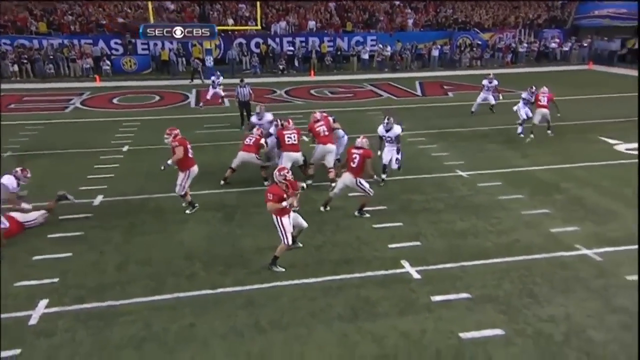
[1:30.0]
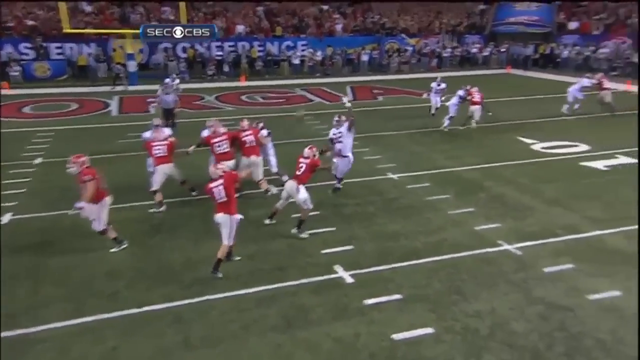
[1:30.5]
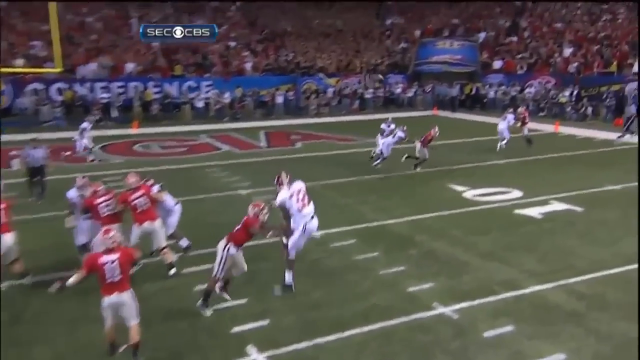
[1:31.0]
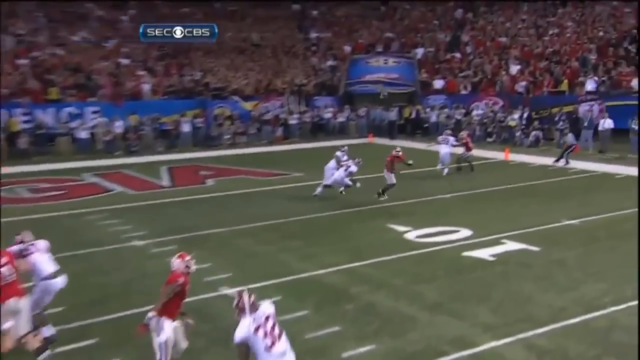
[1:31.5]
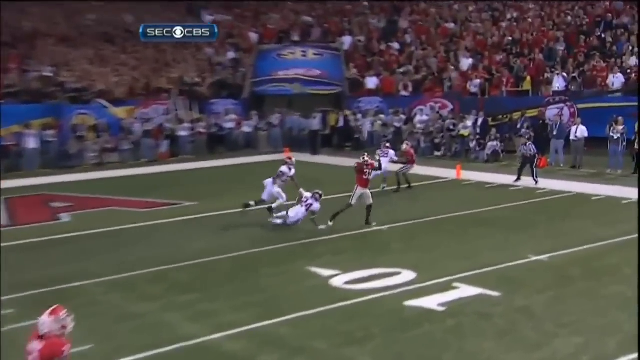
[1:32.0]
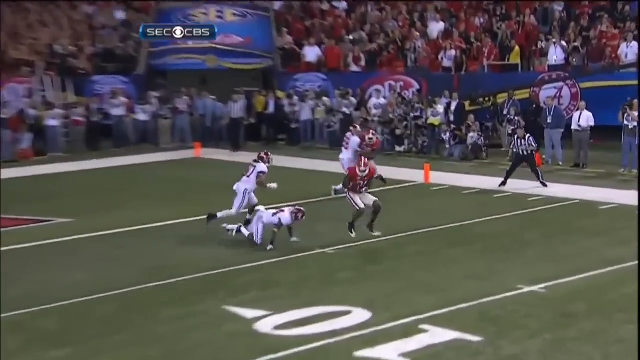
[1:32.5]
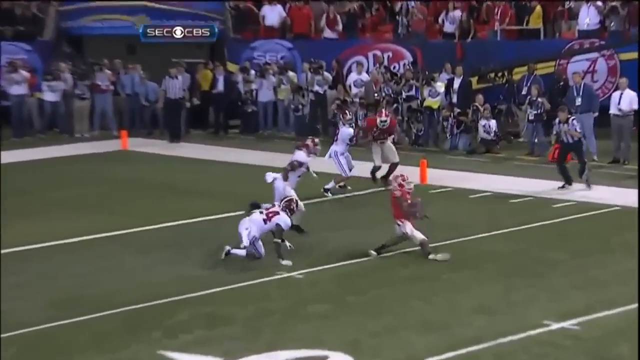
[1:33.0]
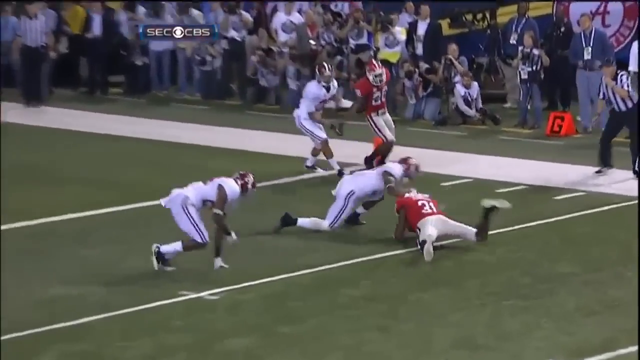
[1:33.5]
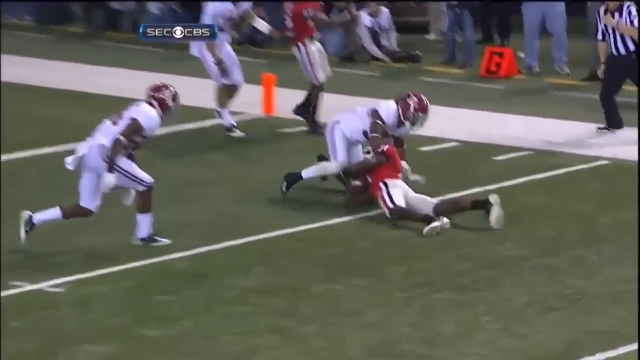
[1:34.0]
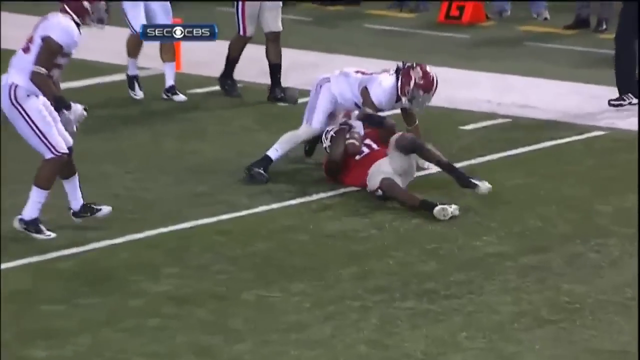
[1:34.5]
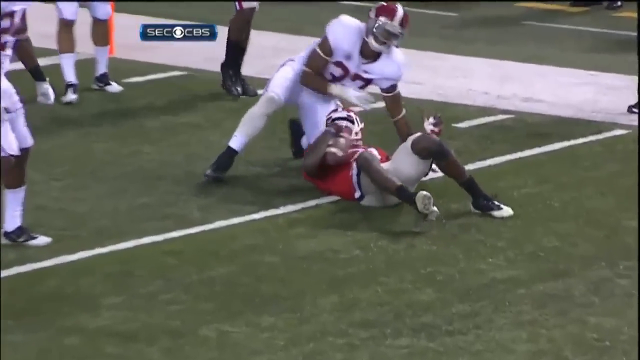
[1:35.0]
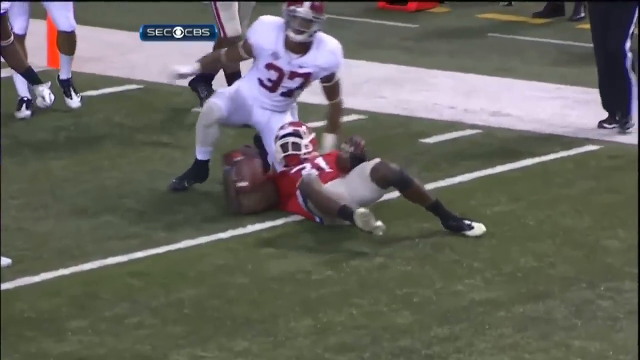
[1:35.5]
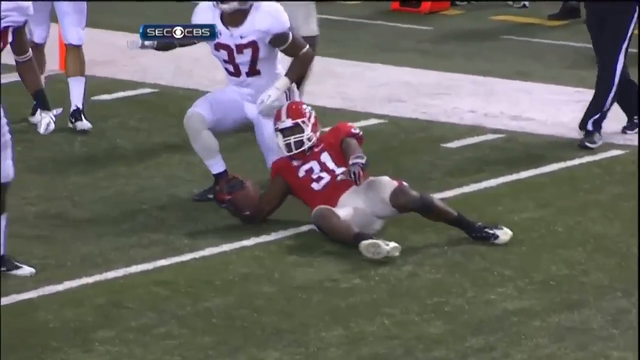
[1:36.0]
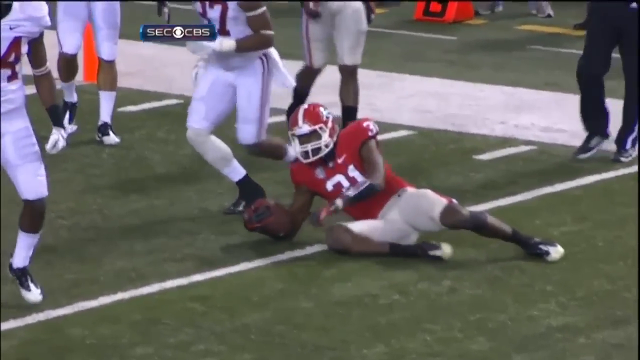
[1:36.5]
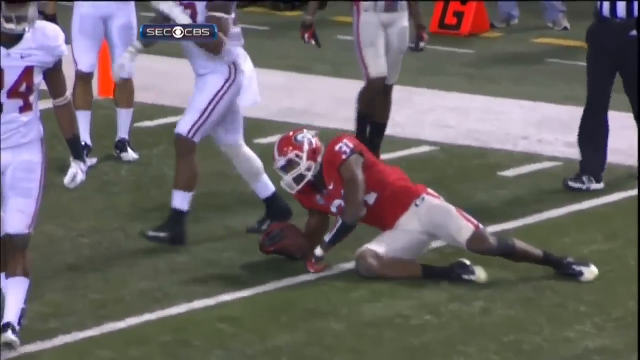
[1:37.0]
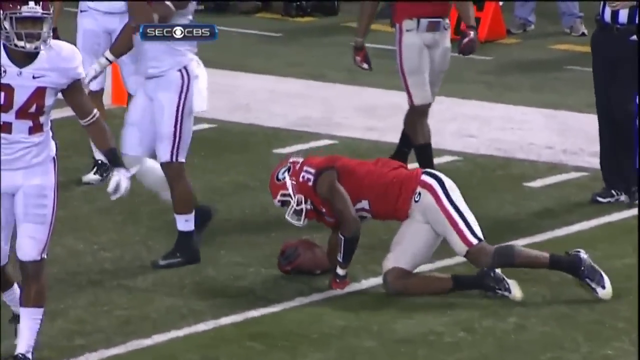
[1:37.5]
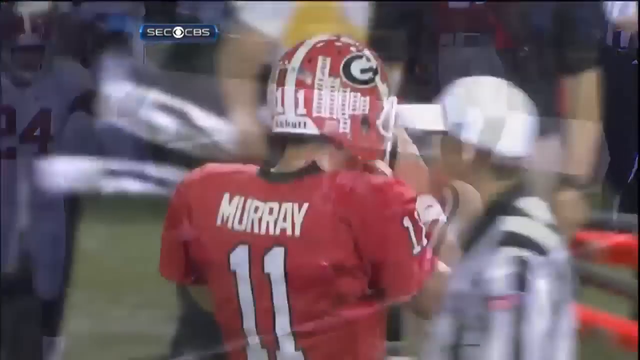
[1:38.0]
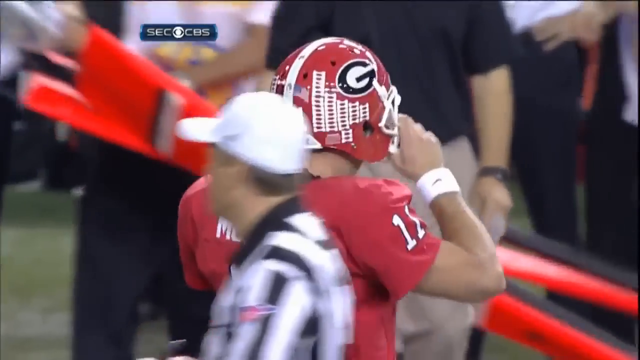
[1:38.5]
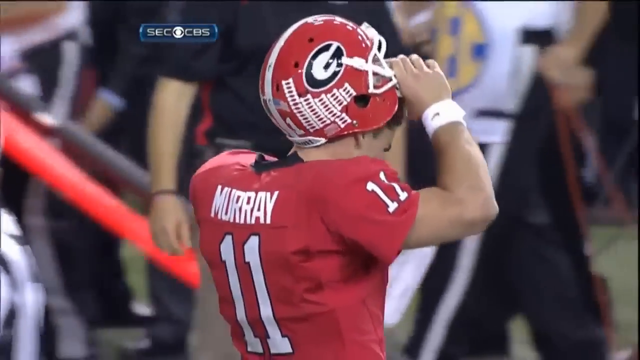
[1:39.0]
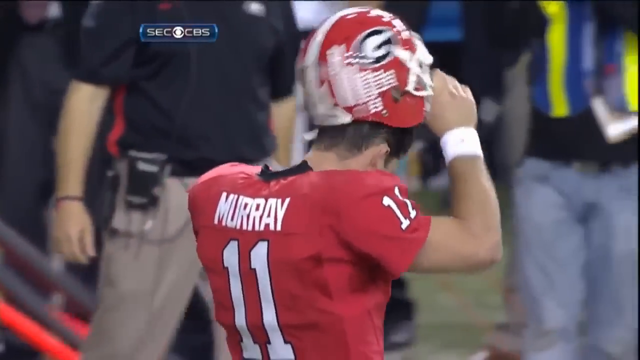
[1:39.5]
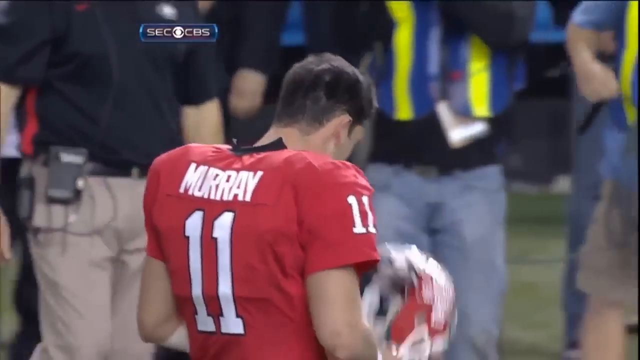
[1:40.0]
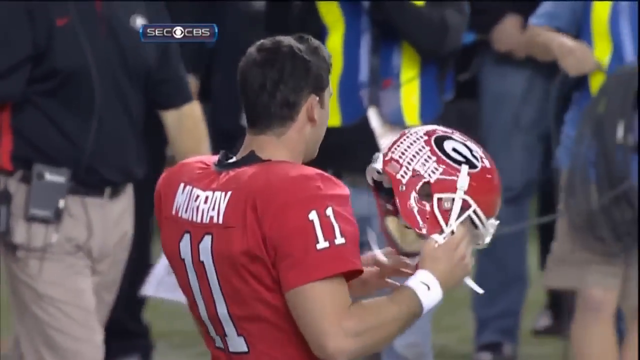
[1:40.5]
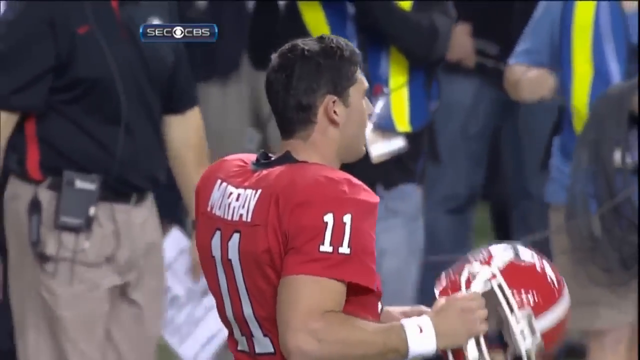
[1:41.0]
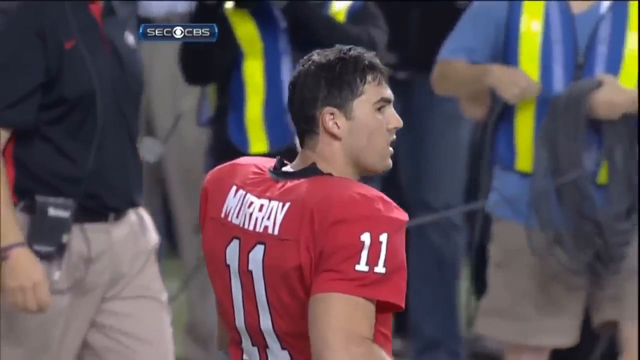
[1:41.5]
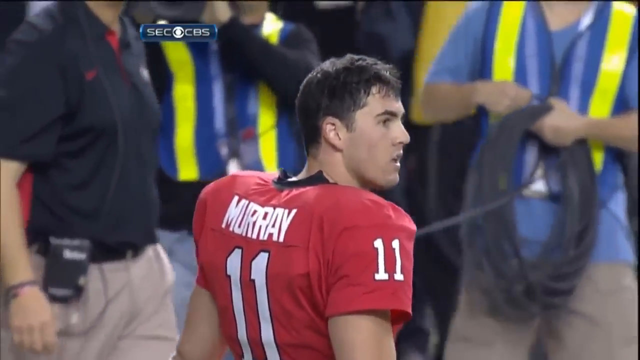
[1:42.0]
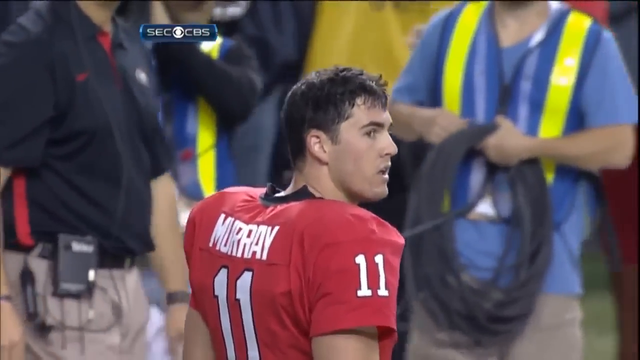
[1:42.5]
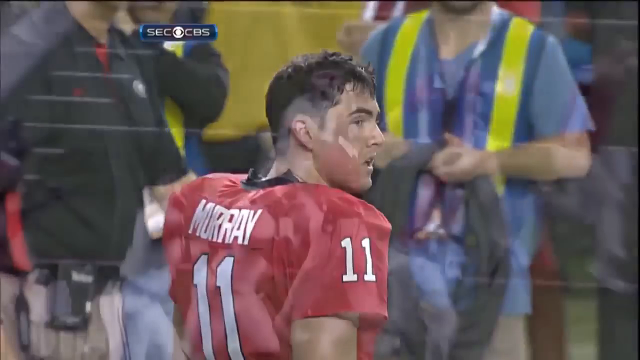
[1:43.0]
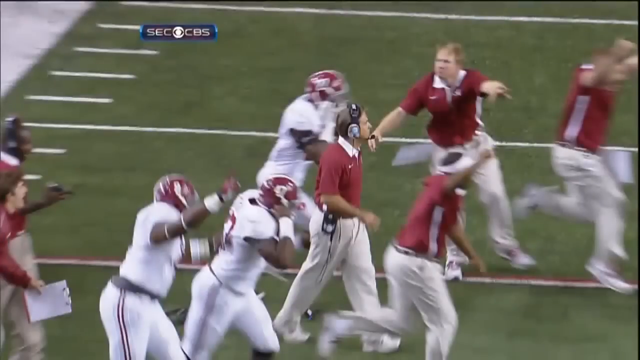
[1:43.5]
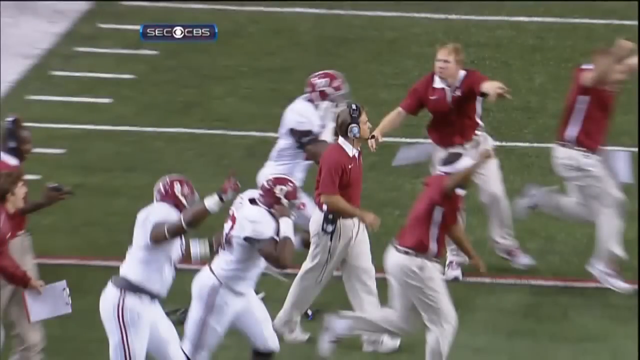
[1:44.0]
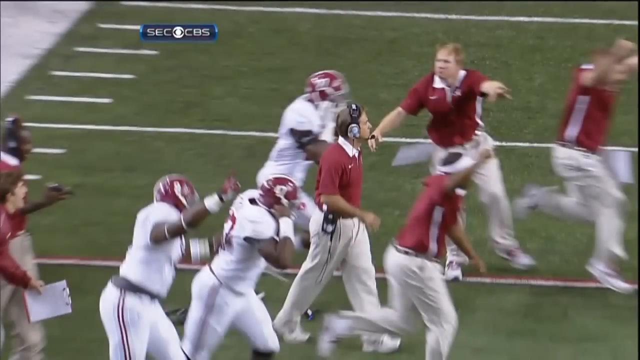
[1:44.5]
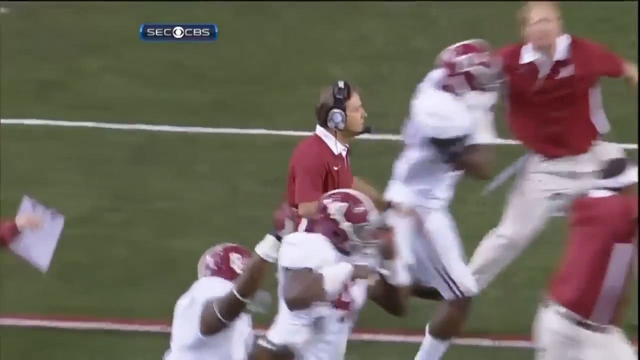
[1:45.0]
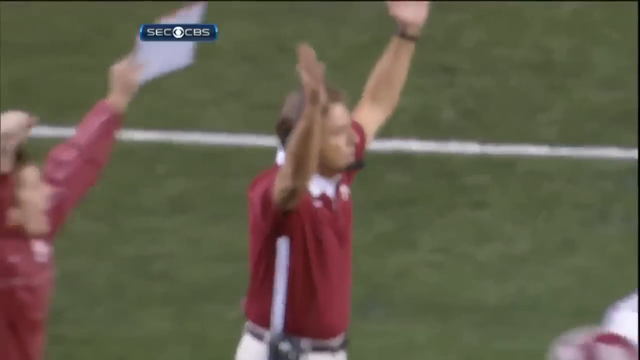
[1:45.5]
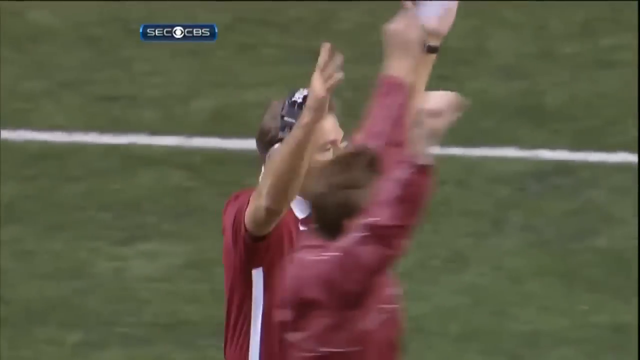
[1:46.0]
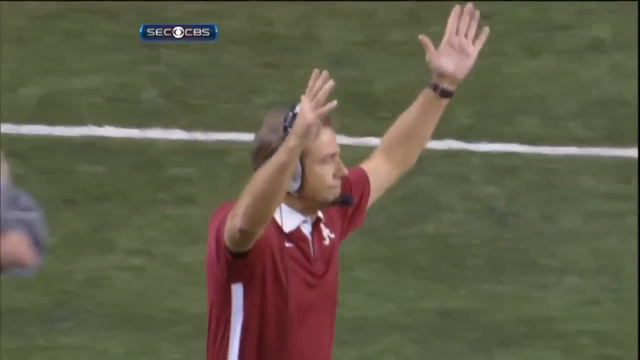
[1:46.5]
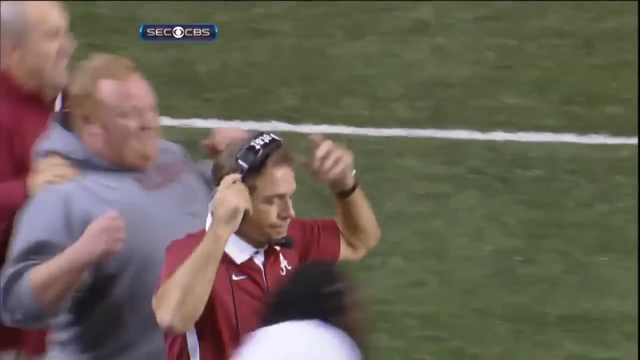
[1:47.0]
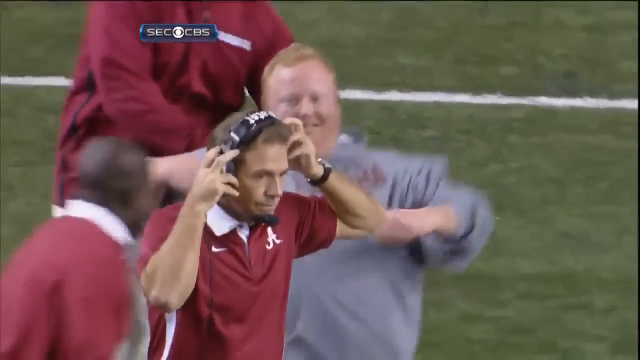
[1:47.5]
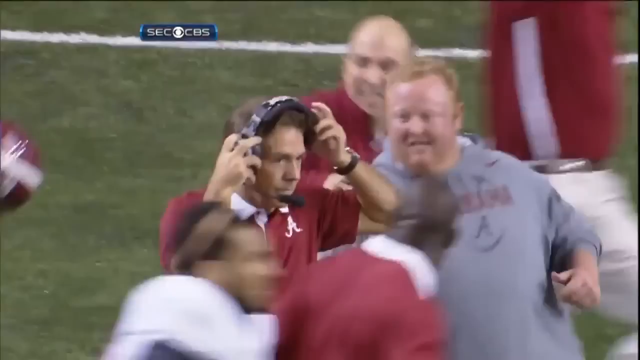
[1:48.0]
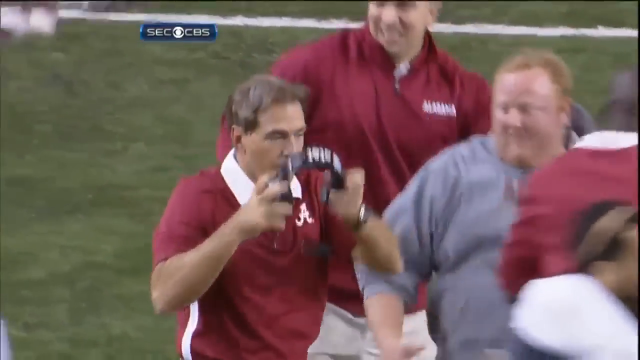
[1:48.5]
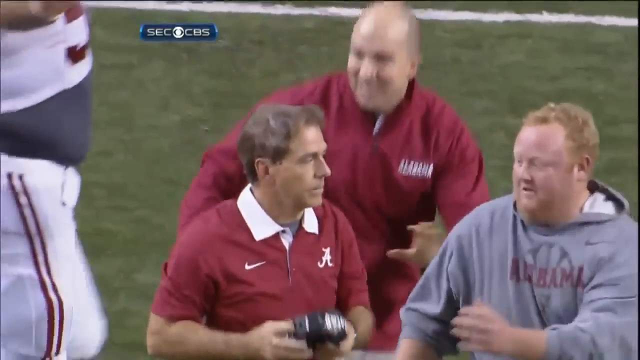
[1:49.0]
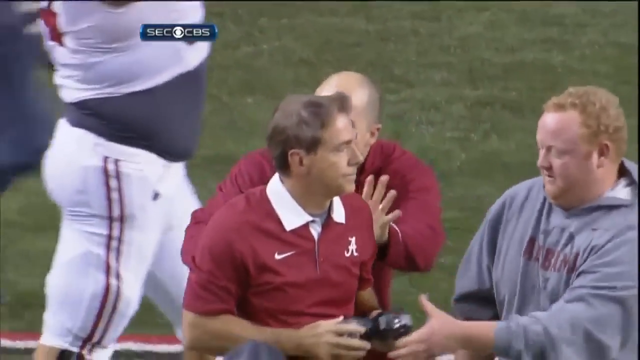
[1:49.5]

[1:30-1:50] The last play of the game is replayed from a sort of backside view. The quarterback looks to the right. The offense wears red jerseys with white pants, and the defense wears white jerseys with white pants. A referee is standing behind the defense, another referee is in the end zone, and in the very back the audience is in the stands. The quarterback throws to the right, and a defender in white, number 32, jumps and hits the ball, so it does not go where the quarterback wants it to. One of the players in red jerseys catches it short of the end zone, ending the play. A close-up shows the quarterback, Murray, number 11, taking off his helmet, very frustrated. The scene changes to the other team watching the play happen, with very celebratory expressions. A coach in a red shirt with a white A on the top left chest puts his hands in the air and smiles slightly, then reaches for his black headset, takes it off, and hands it to another man in a gray sweater.